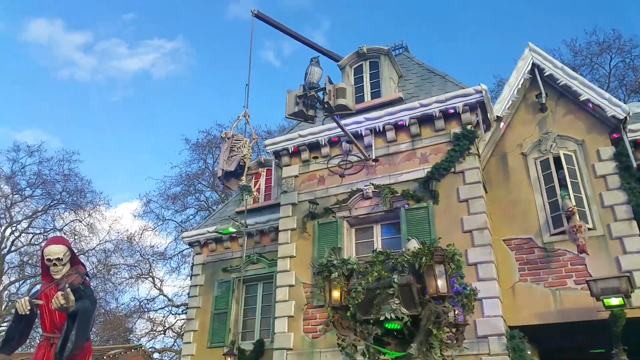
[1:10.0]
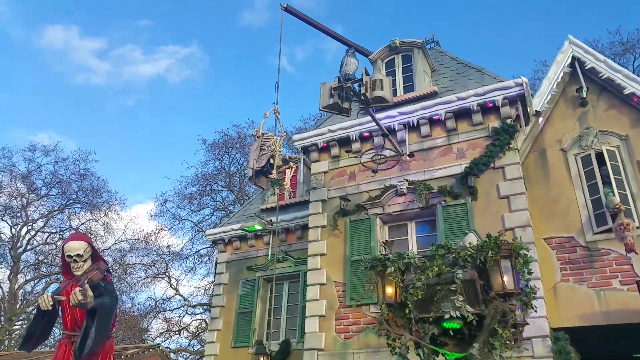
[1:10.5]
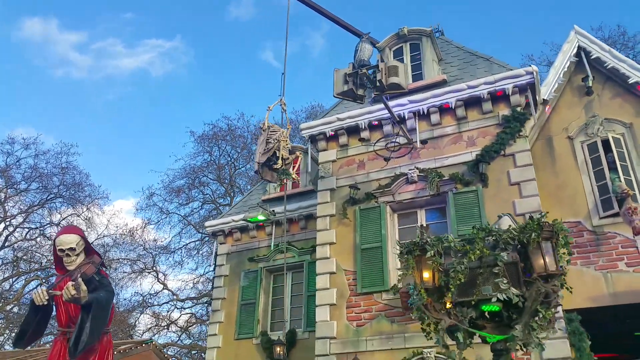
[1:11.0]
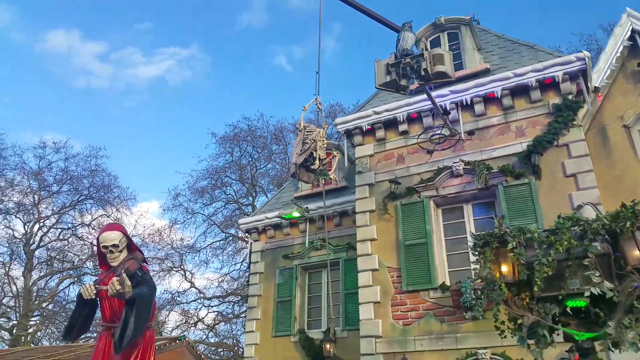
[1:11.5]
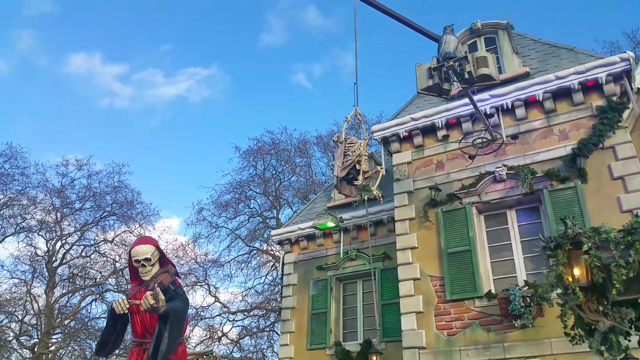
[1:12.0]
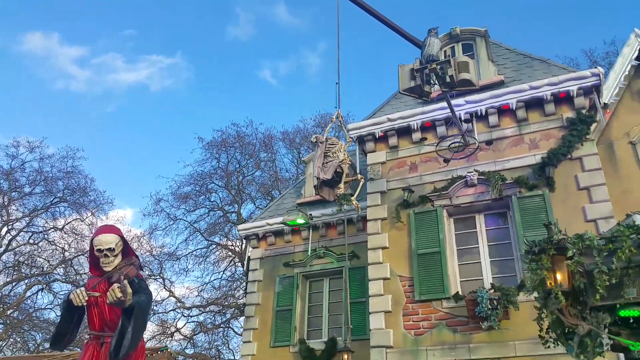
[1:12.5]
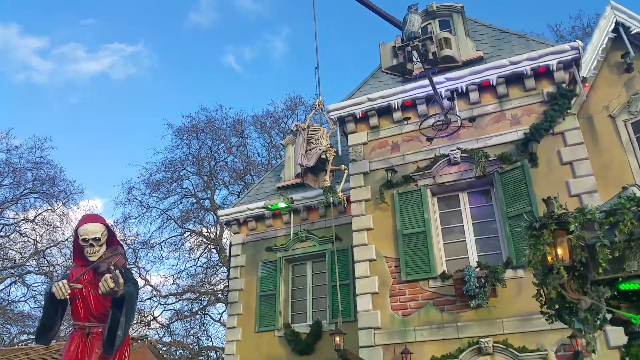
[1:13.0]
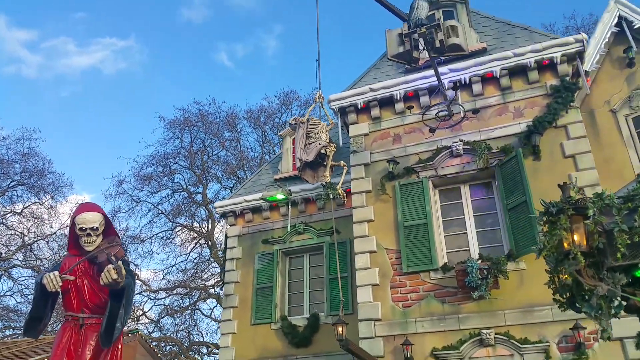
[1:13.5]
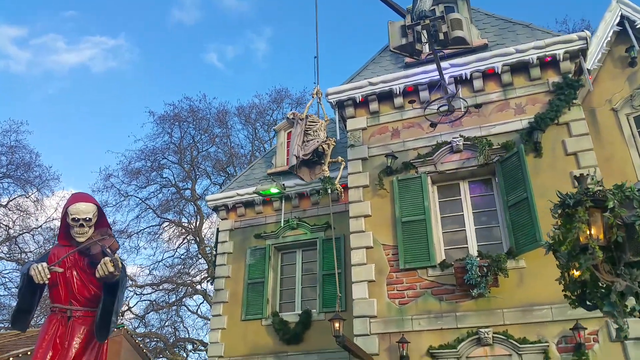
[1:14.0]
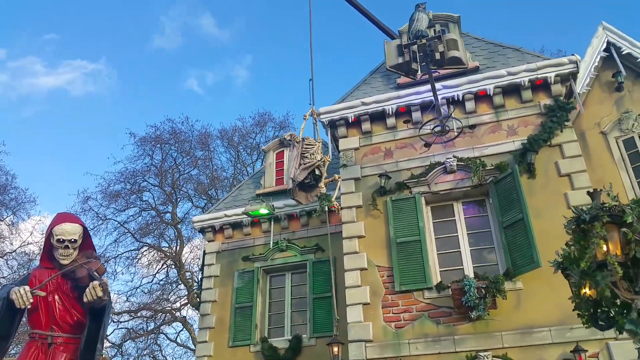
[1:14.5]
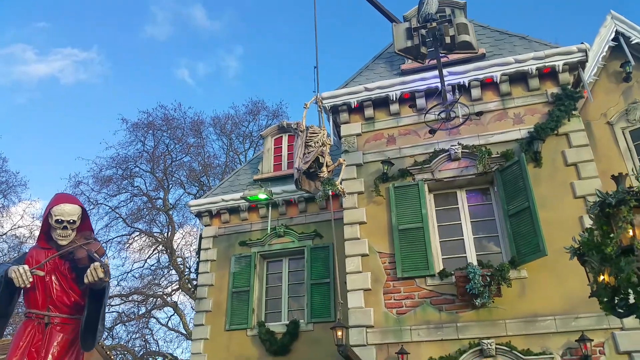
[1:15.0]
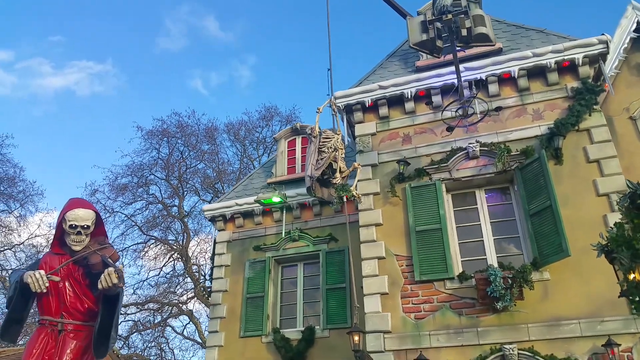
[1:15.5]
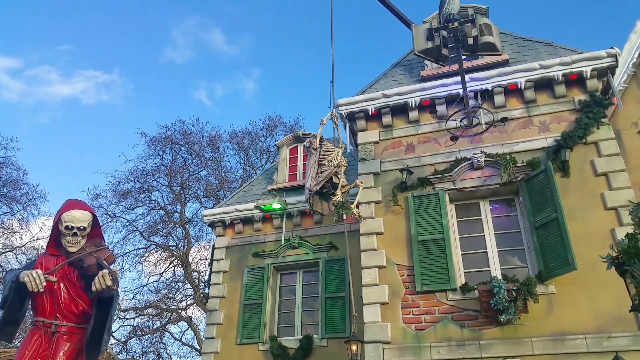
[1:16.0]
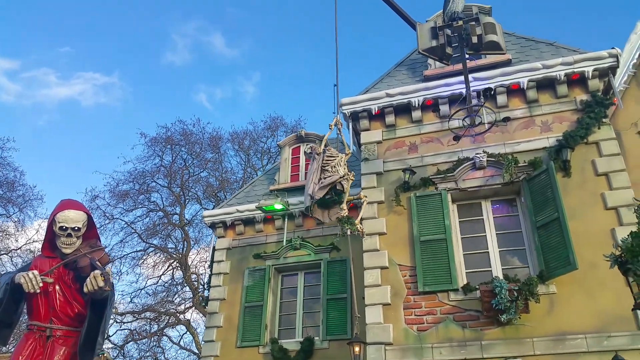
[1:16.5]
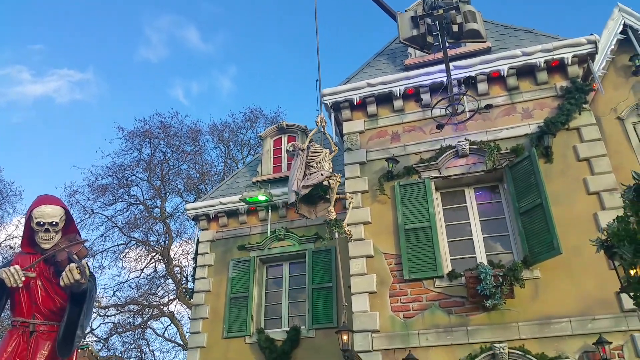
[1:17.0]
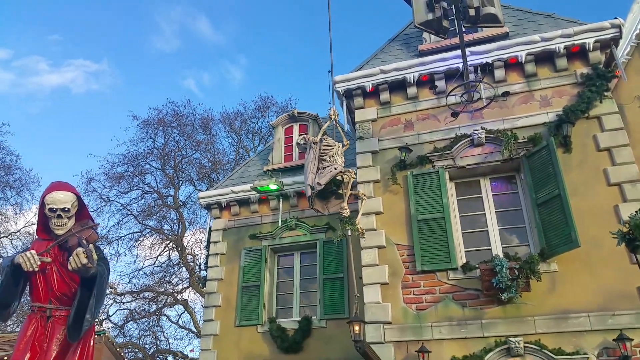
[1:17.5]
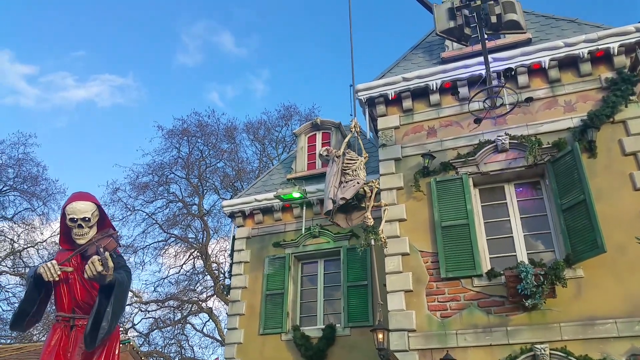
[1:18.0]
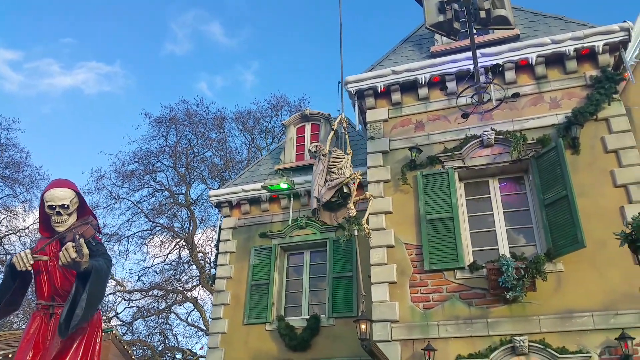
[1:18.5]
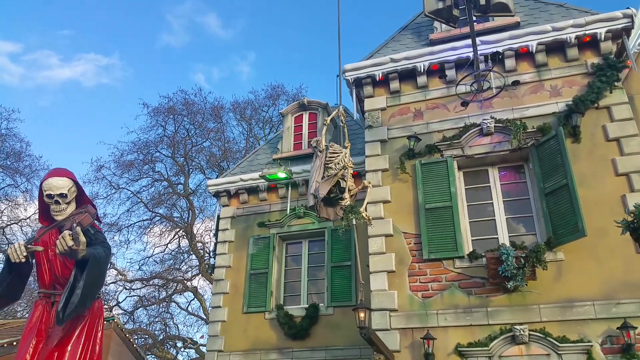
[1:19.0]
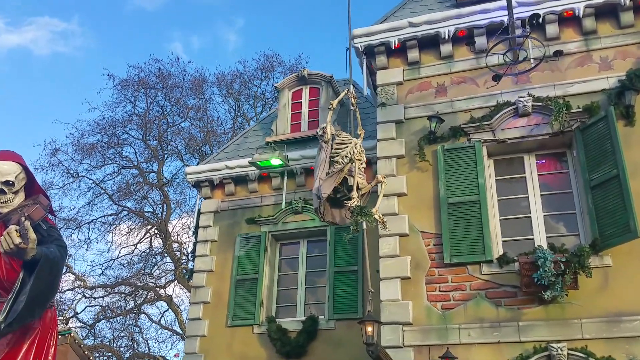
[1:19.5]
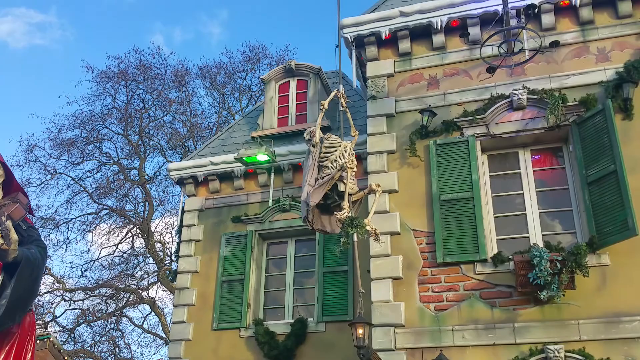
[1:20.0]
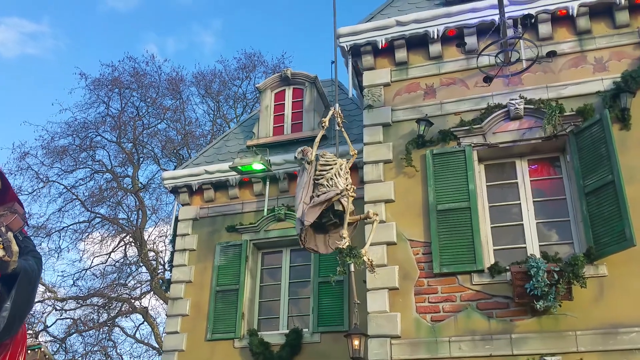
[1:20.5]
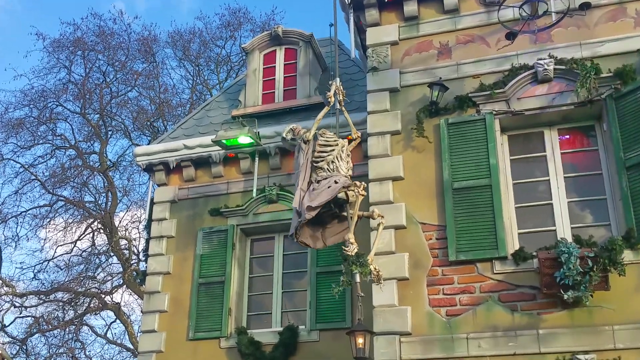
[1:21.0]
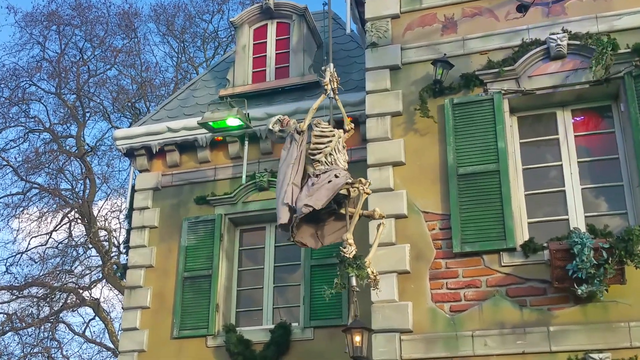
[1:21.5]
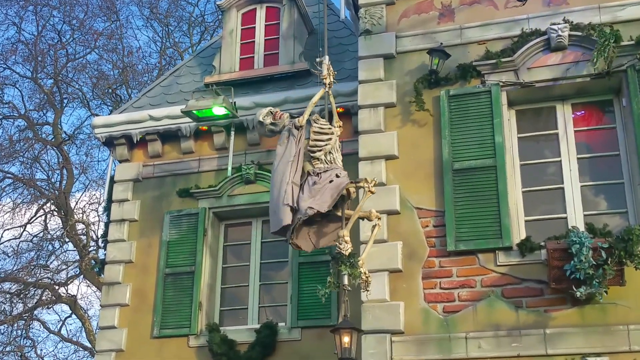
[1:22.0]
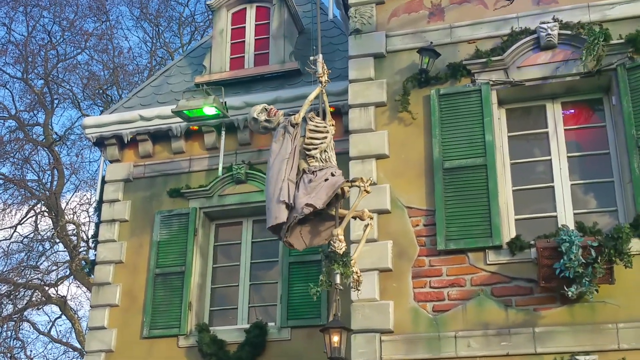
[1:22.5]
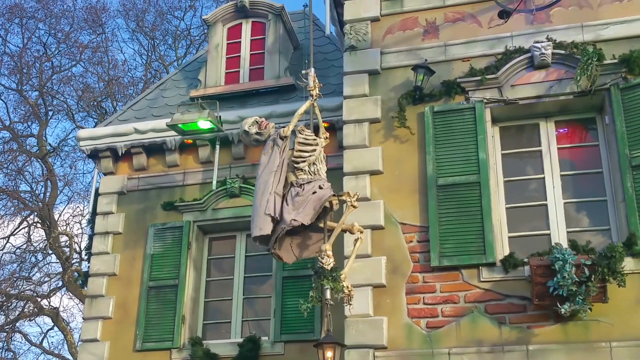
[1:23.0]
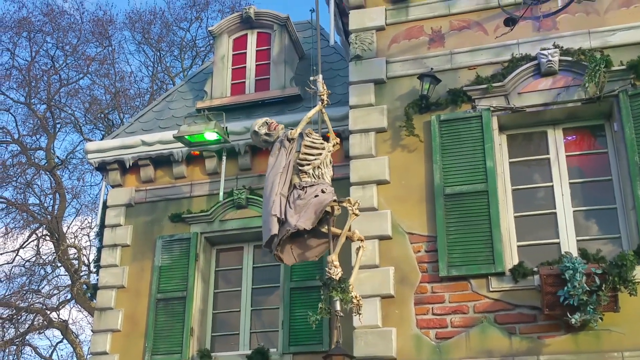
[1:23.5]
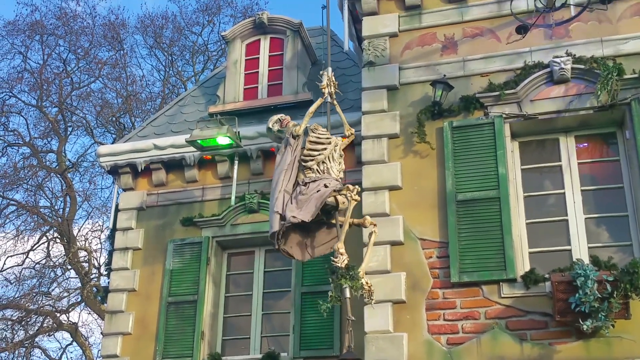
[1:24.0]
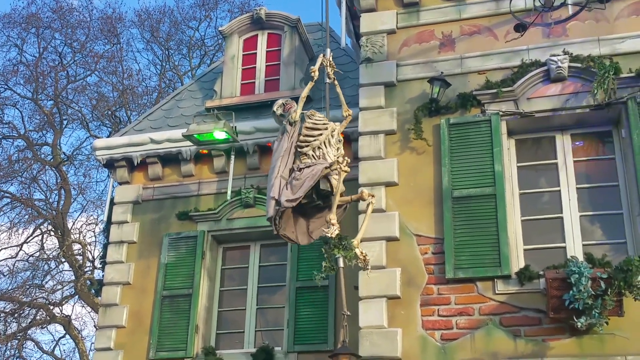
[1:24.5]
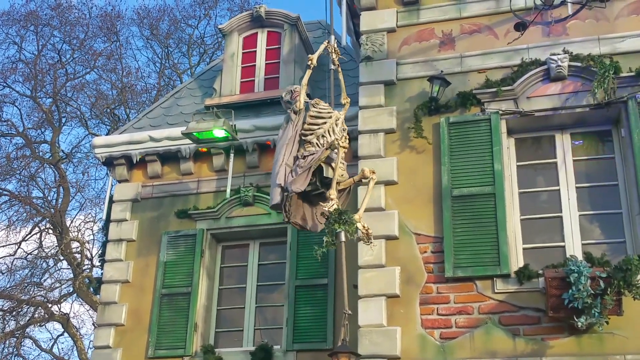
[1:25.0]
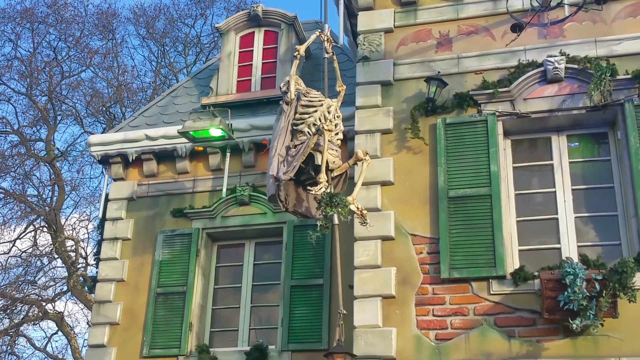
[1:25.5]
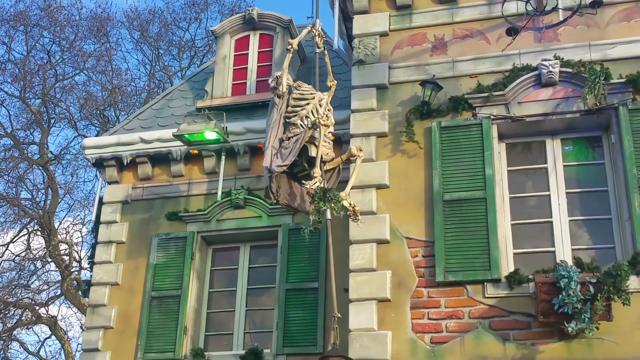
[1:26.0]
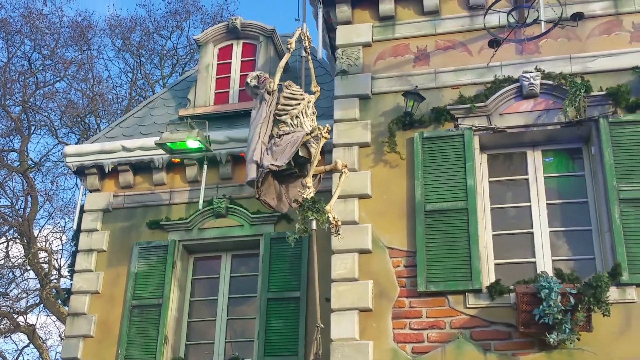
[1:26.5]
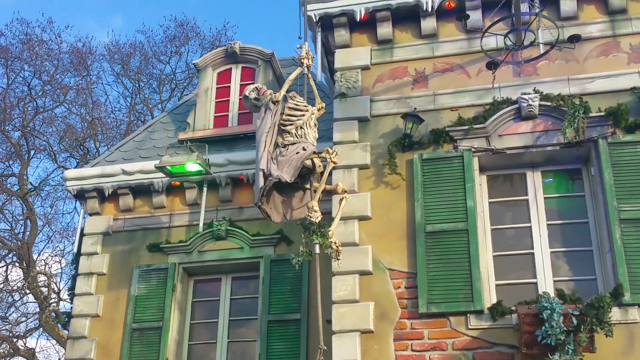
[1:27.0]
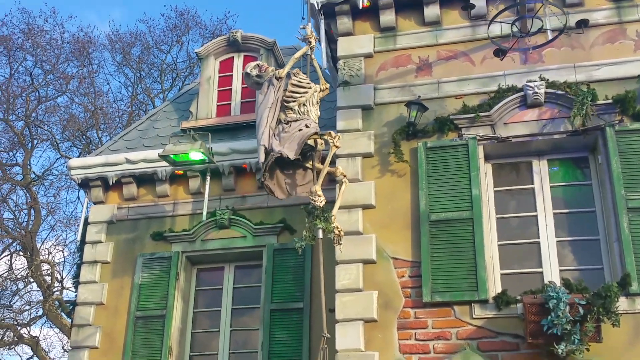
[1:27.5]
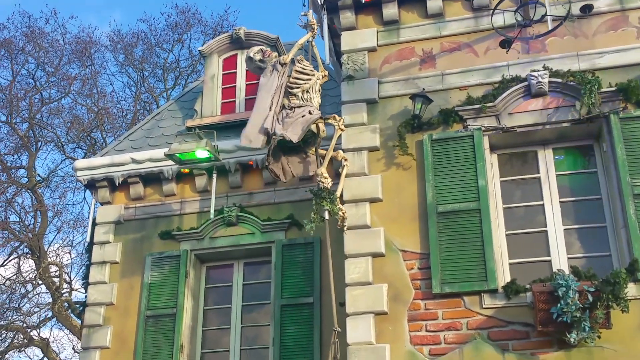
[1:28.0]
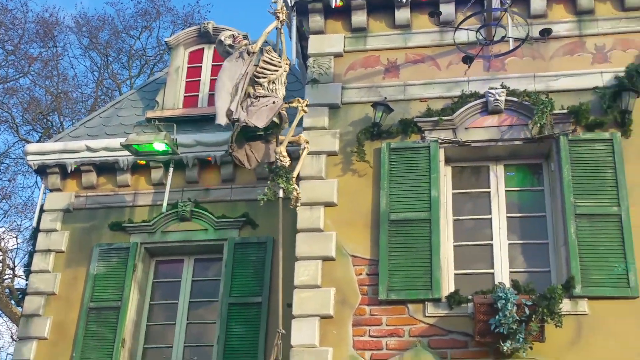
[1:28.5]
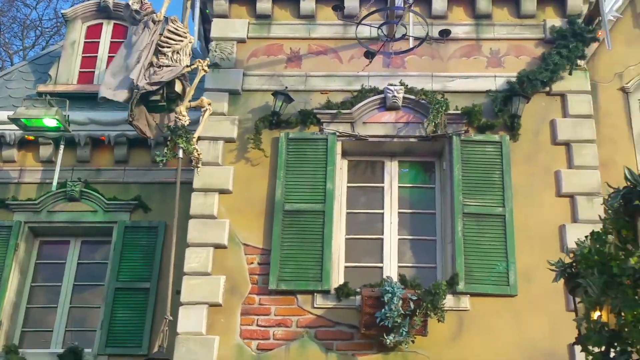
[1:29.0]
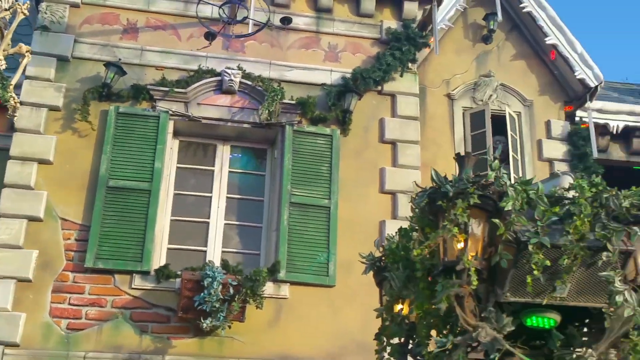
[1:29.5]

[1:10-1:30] A close-up shows the skeleton going down the rope; he appears to be climbing. To the left, another skeleton with a red sort of hood on his head seems to be playing a violin with his head pointed downward. Blue lights are on inside the house, green outside, and there is some red, pink and yellow. The camera watches as the skeleton comes down so far and then climbs back up, his legs and body moving upward as if climbing; he wears some sort of tattered cloth on his back and around his waist. The camera pans to the right toward the center of the home, and the violin-playing skeleton appears to rock slowly from side to side to appear human-like.